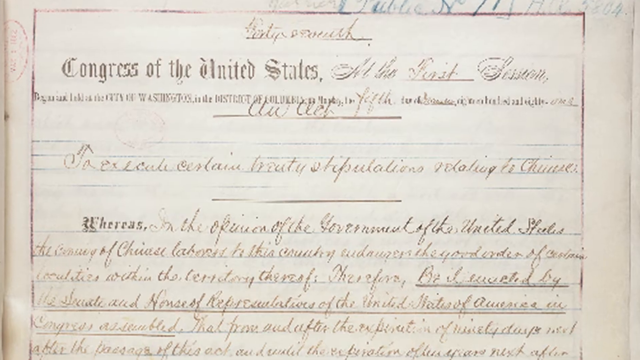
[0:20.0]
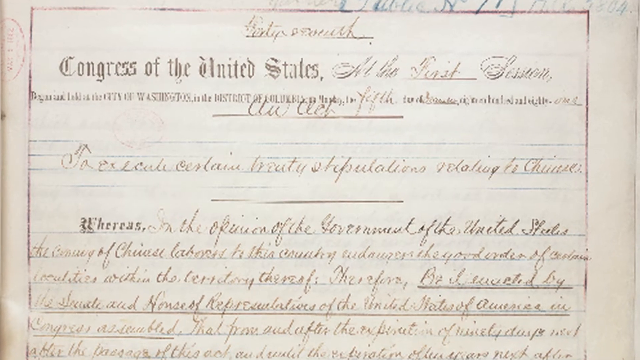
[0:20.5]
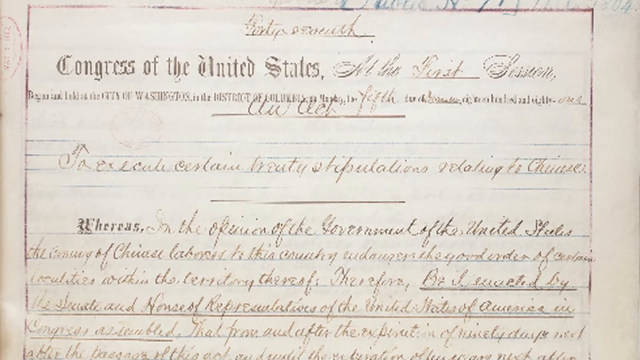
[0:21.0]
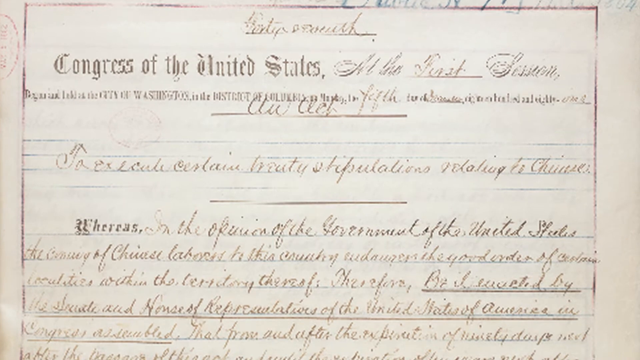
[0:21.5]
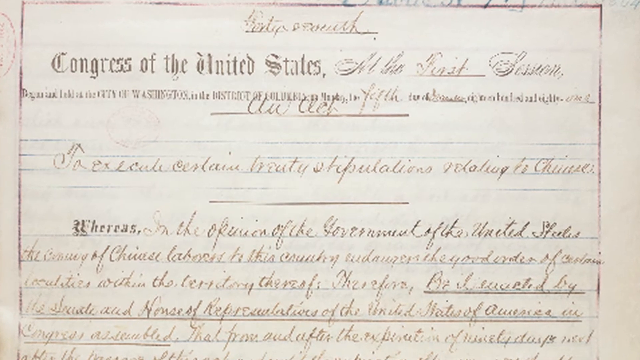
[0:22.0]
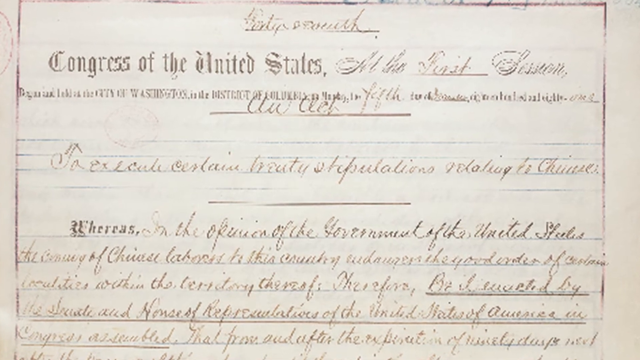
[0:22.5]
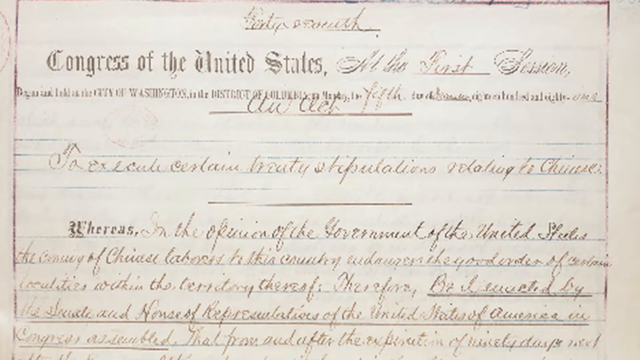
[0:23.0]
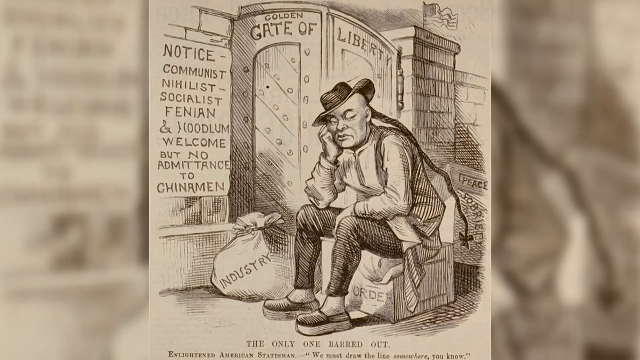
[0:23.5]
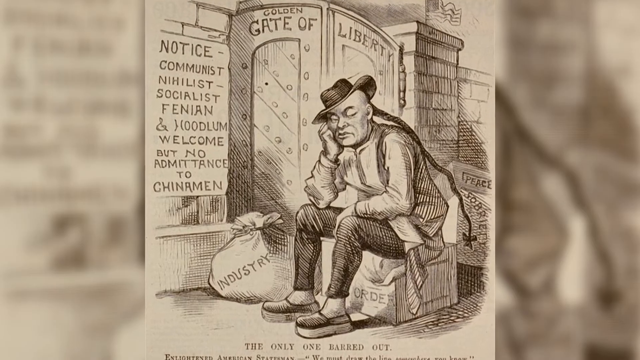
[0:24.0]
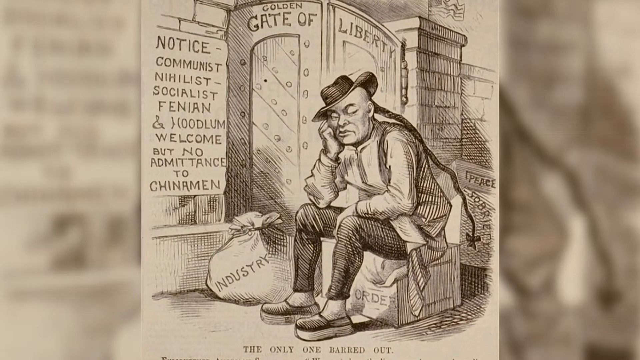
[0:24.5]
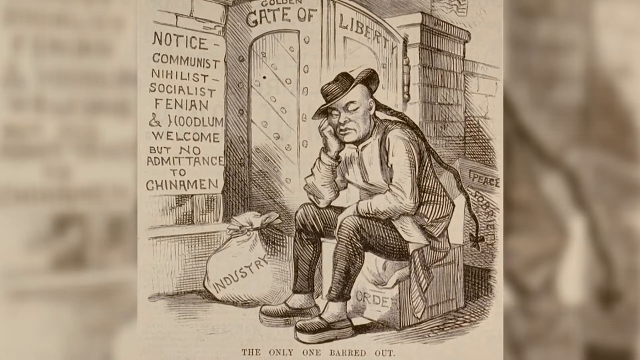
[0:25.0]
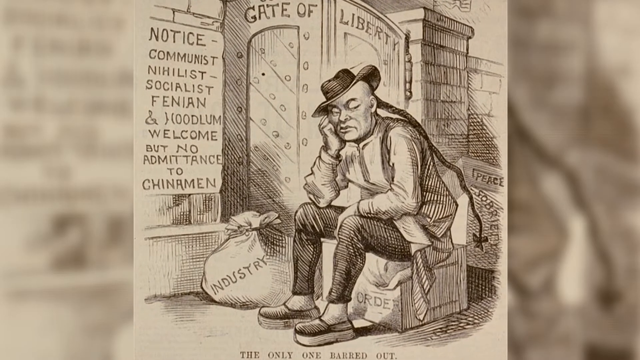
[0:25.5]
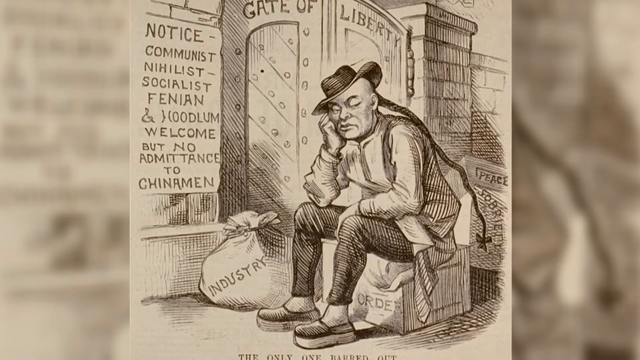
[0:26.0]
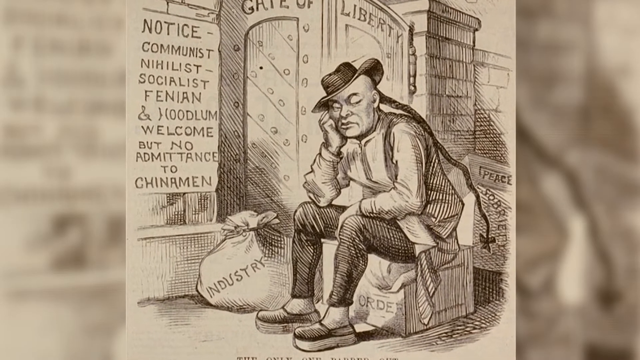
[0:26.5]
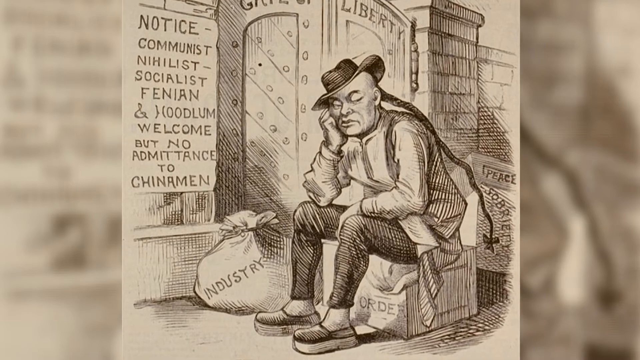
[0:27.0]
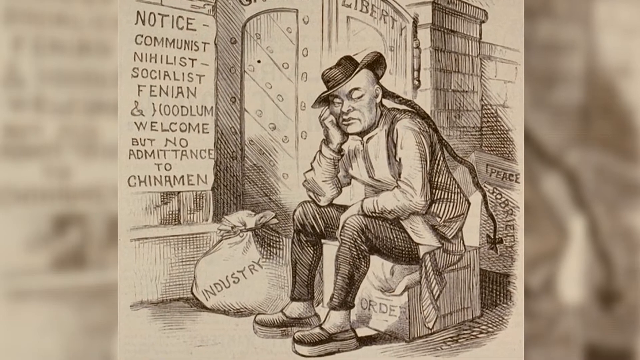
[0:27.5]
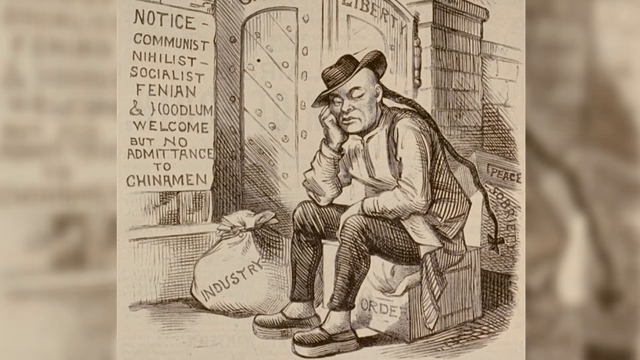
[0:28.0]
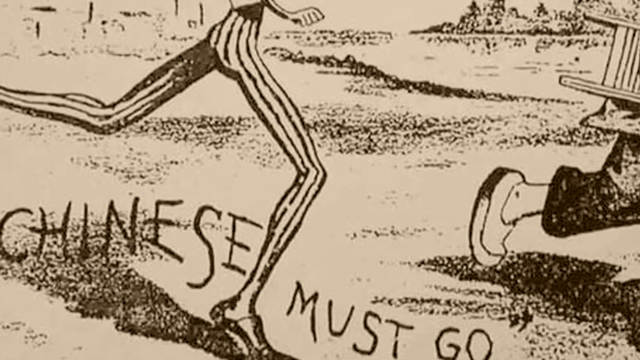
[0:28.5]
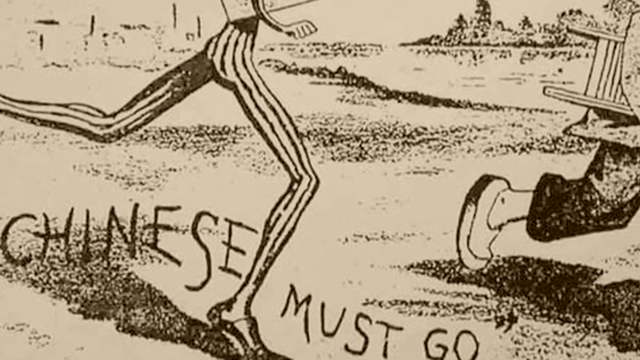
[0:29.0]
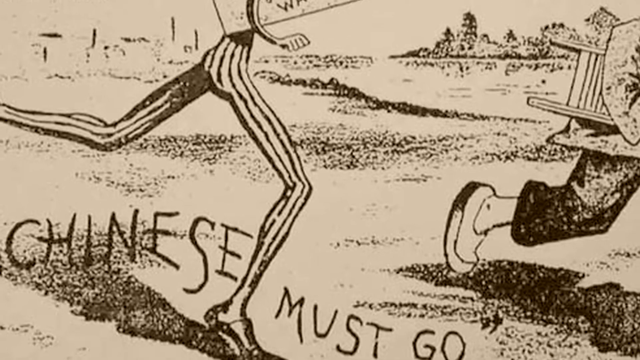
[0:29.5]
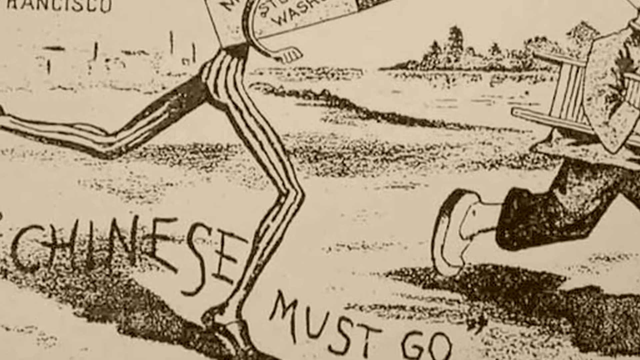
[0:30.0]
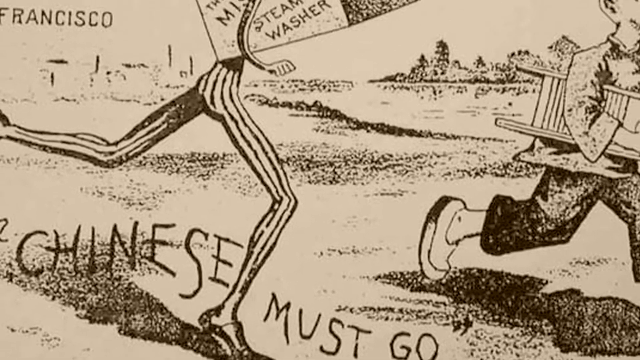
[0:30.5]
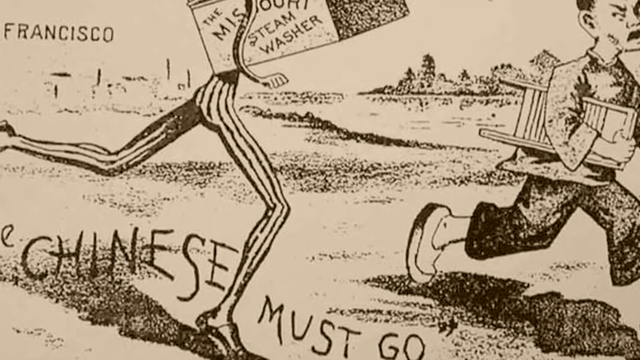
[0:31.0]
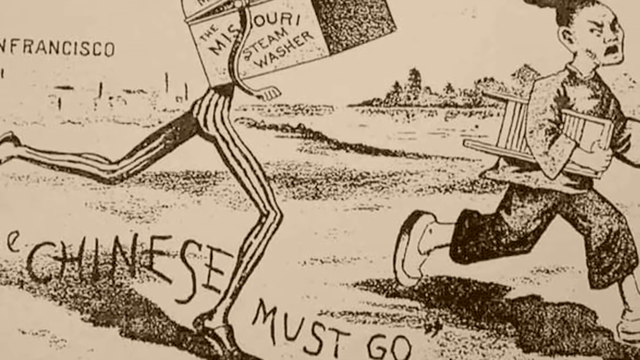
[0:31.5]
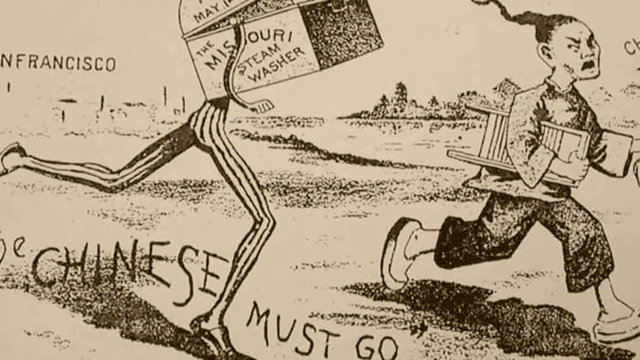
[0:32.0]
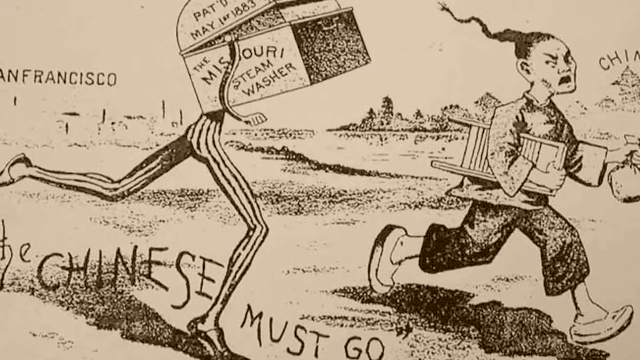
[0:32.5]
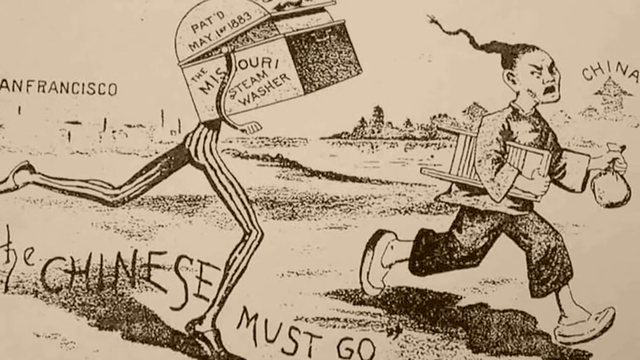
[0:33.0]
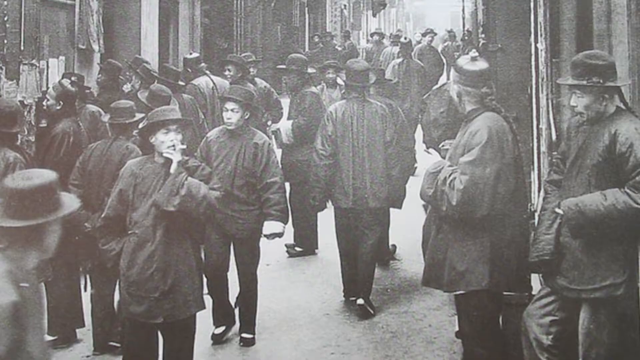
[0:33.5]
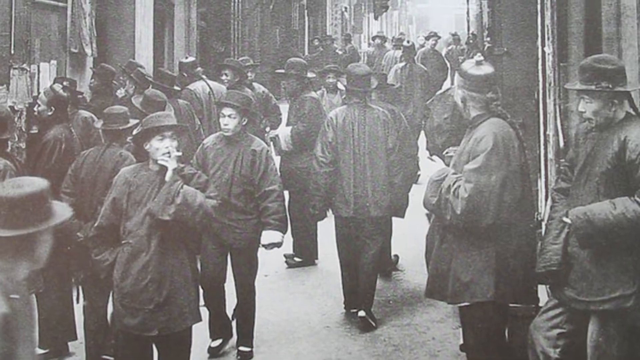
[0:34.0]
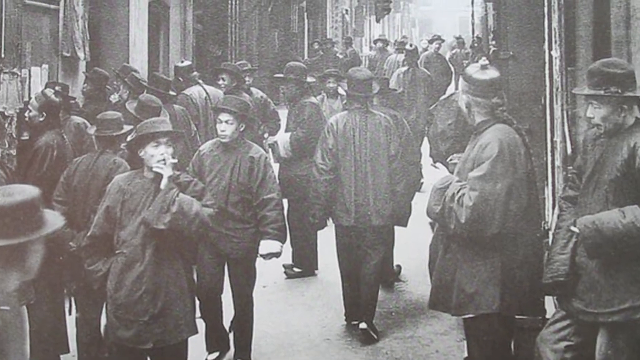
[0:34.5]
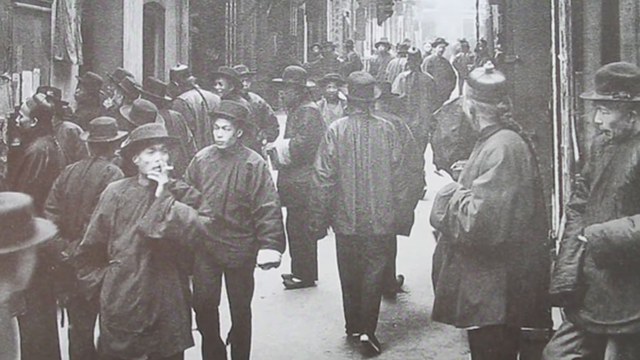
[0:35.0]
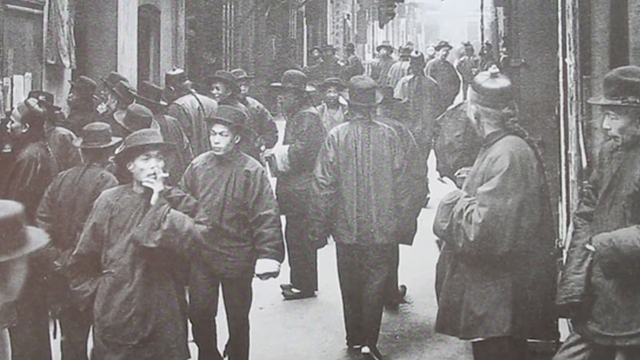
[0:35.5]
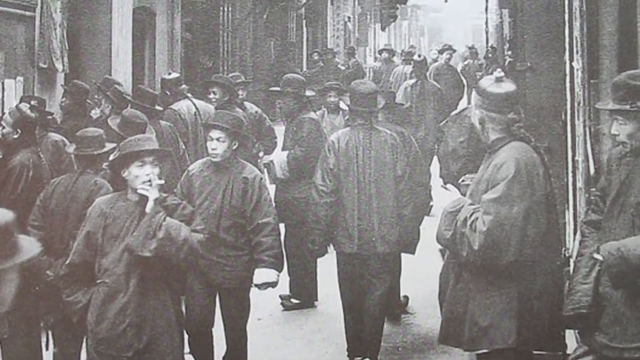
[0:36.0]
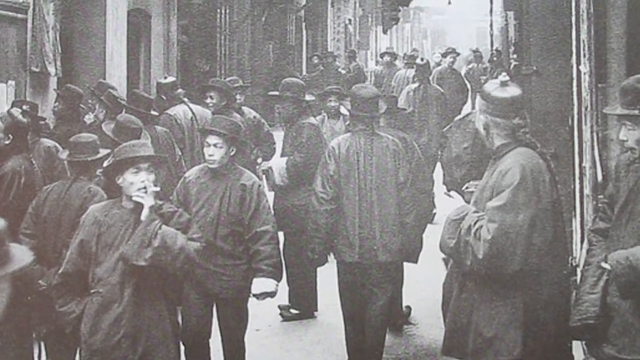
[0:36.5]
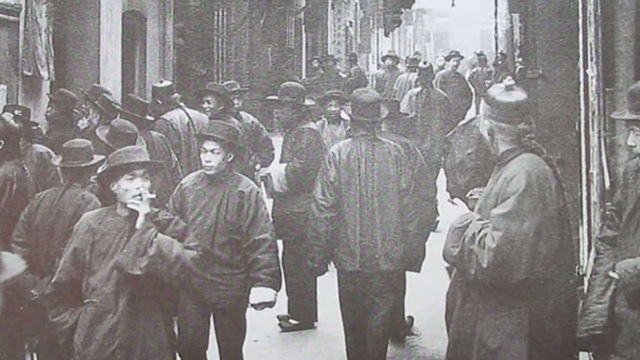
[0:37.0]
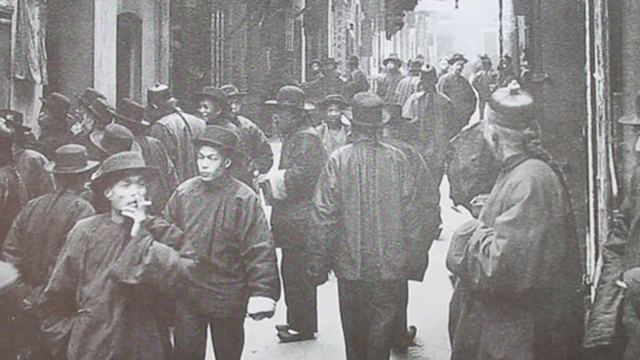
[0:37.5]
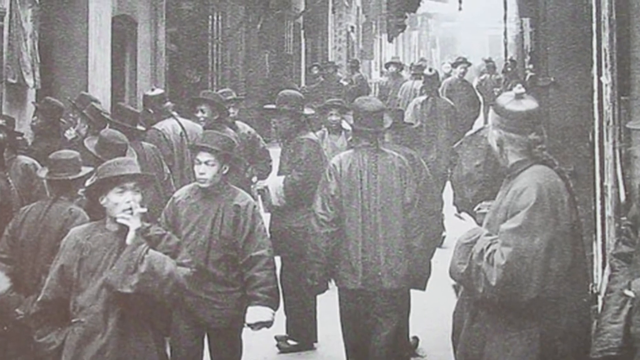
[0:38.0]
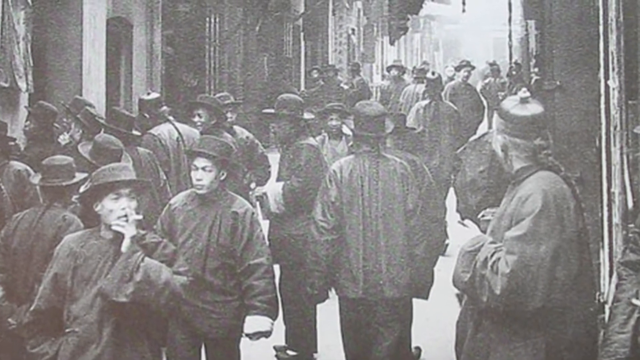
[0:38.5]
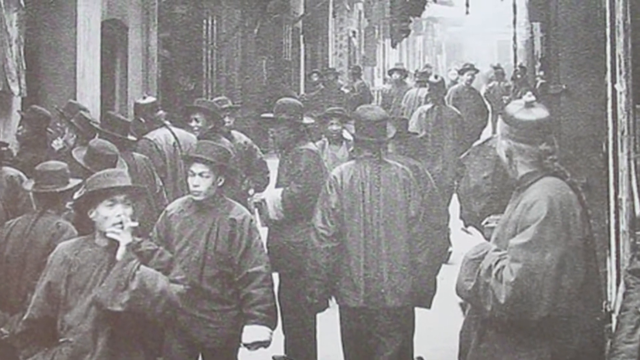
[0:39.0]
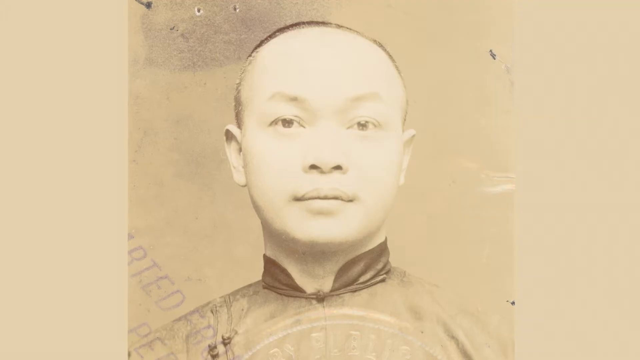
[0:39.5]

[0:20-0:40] A document reads "Congress of the United States," with more text in cursive that cannot be made out. The view then switches to an old illustration of an Asian man with a long ponytail, wearing a cowboy hat. There is a stone wall with a gate that looks like it is made of metal; the top of the gate says "Golden Gate of Liberty." To the left of the gate is a sign that reads "Notice Communists, Nihilists, Socialists, Finian, and Hoodlum. Welcome, but no admittance to Chinaman." On the ground next to the man is a bag tied with string, with "industry" written on it. In the far background, over the stone wall, is the American flag. The man has a bow at the end of his ponytail, and he is sitting on a box with the word "order" on it.